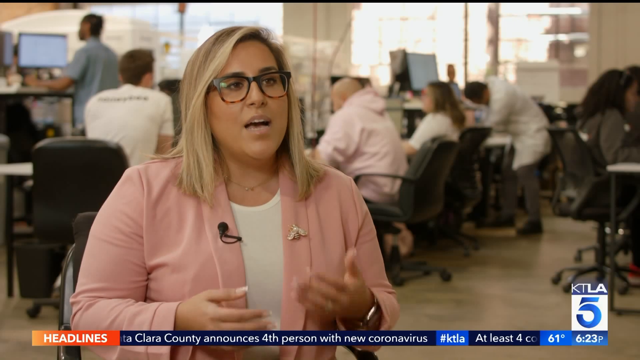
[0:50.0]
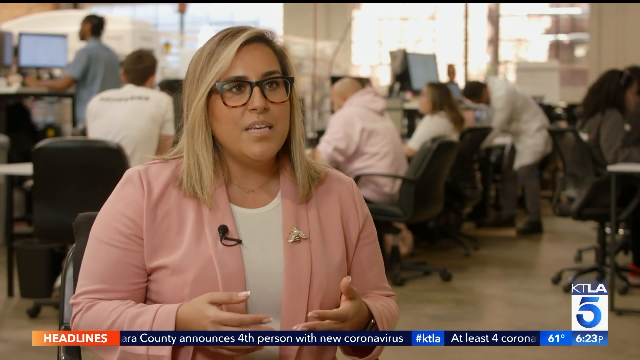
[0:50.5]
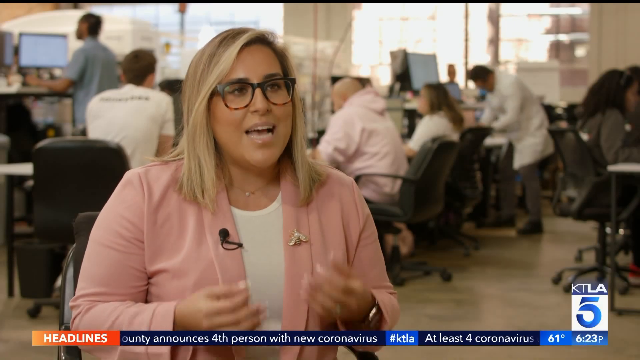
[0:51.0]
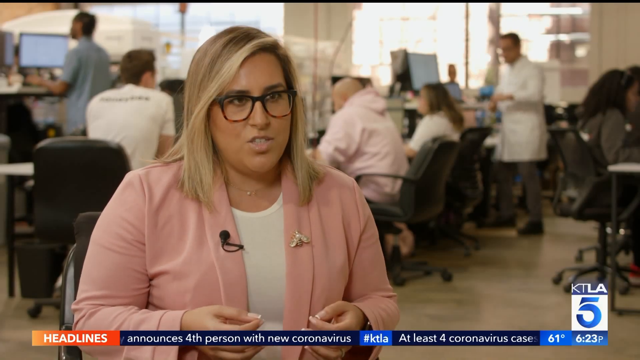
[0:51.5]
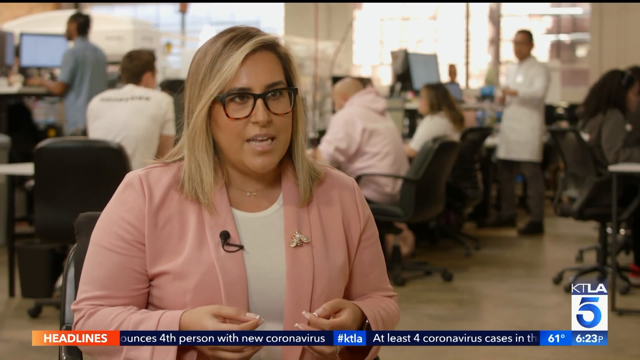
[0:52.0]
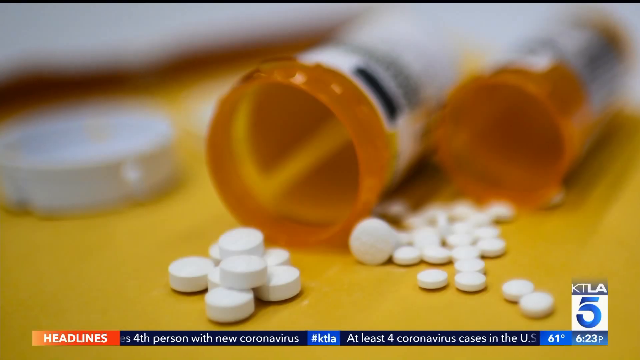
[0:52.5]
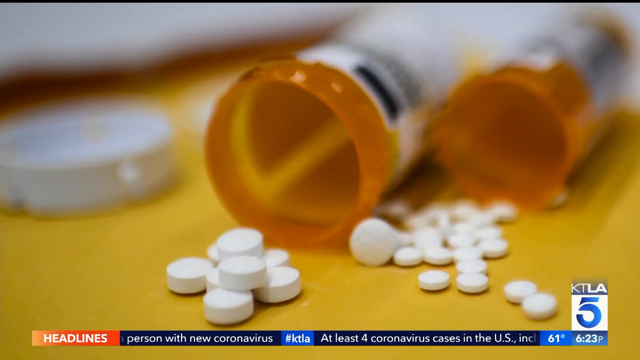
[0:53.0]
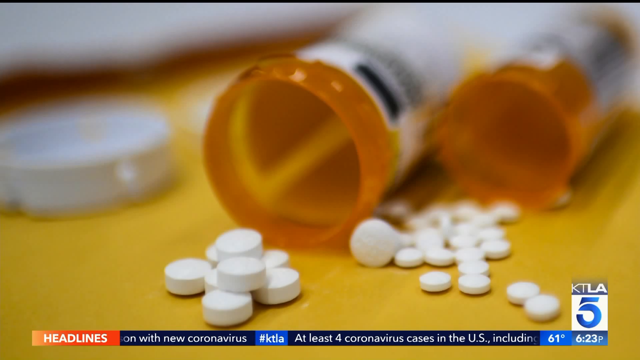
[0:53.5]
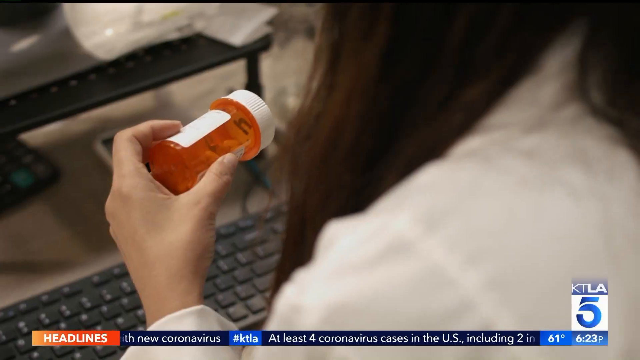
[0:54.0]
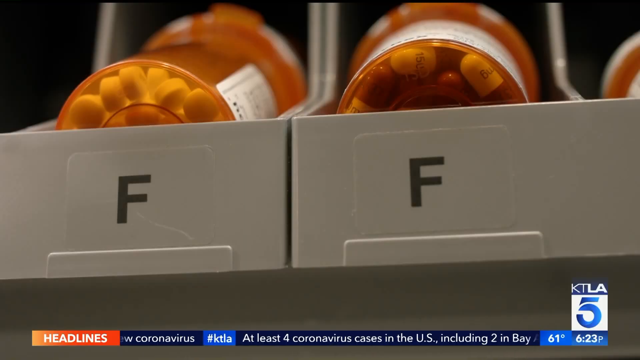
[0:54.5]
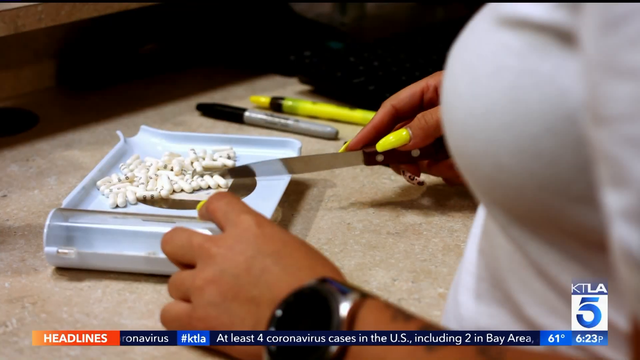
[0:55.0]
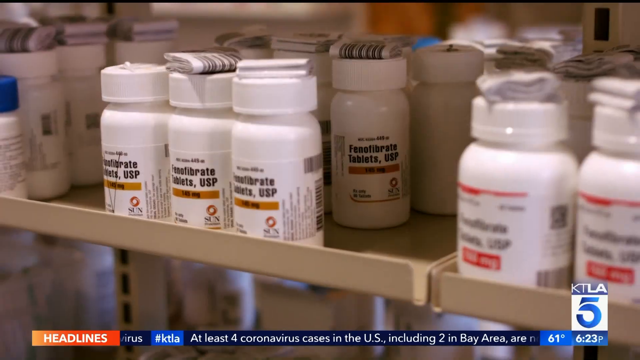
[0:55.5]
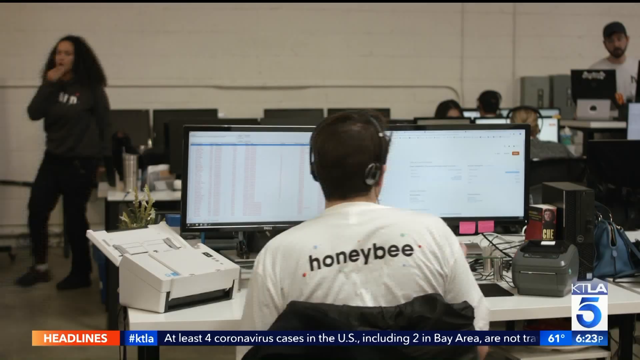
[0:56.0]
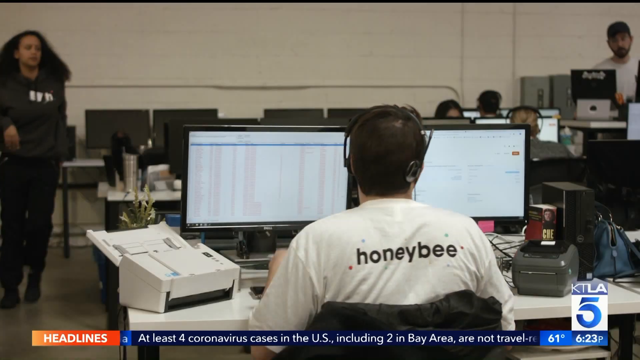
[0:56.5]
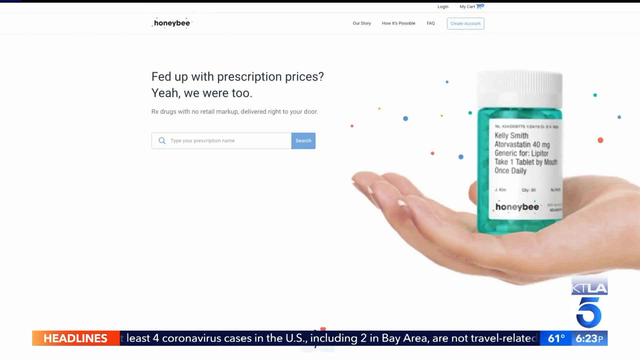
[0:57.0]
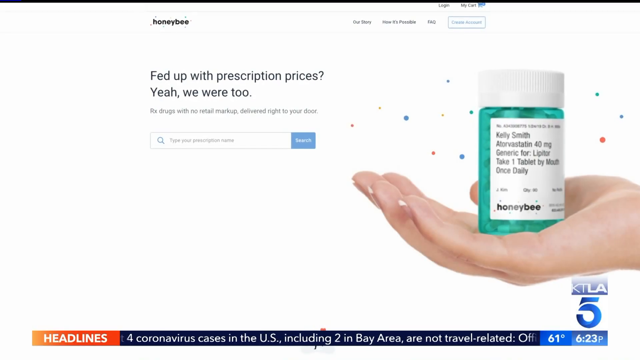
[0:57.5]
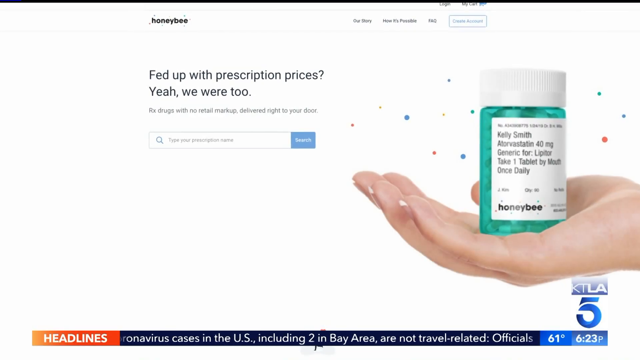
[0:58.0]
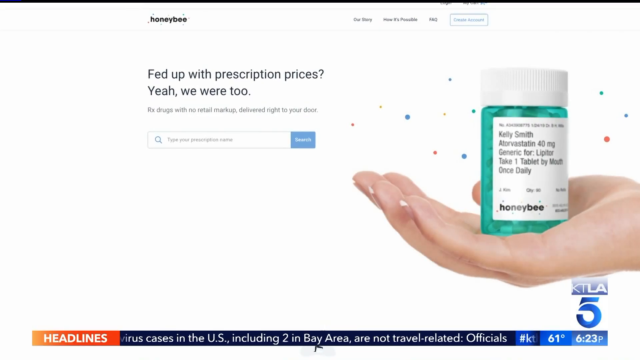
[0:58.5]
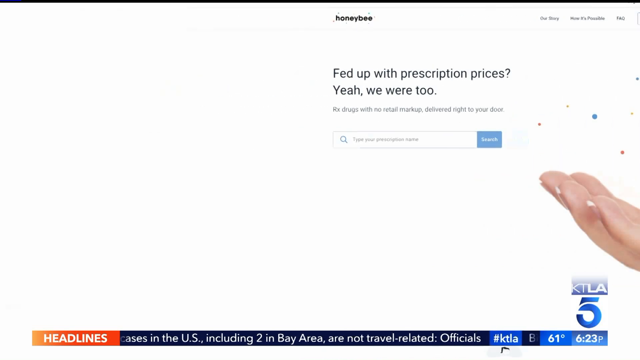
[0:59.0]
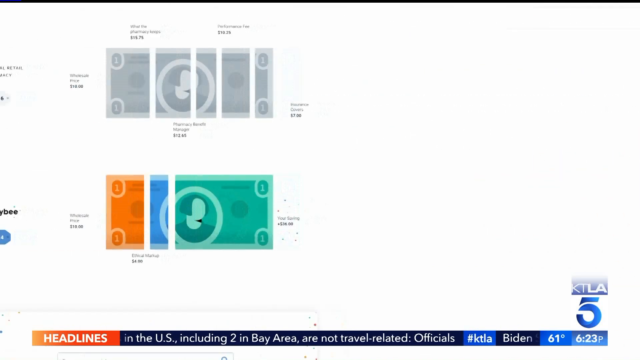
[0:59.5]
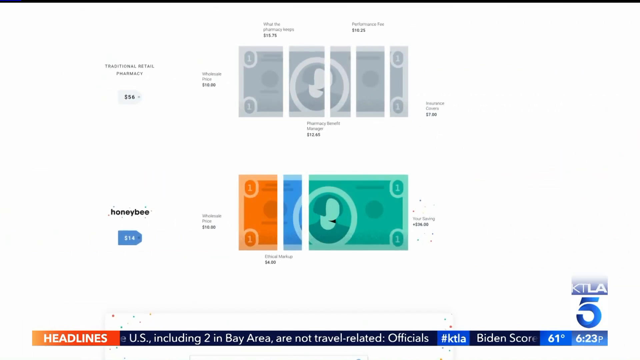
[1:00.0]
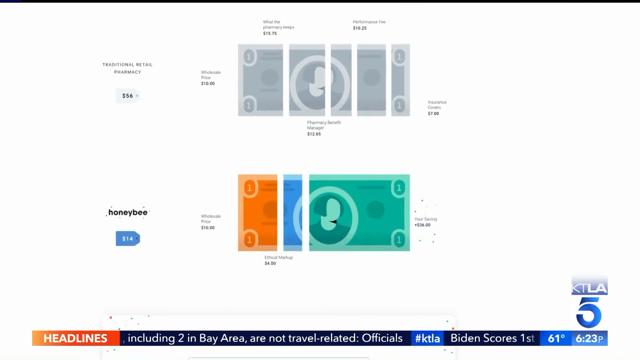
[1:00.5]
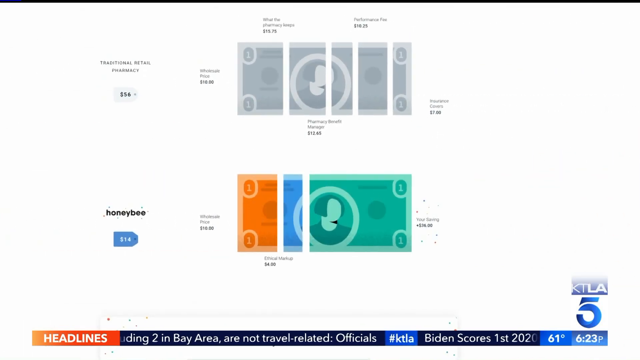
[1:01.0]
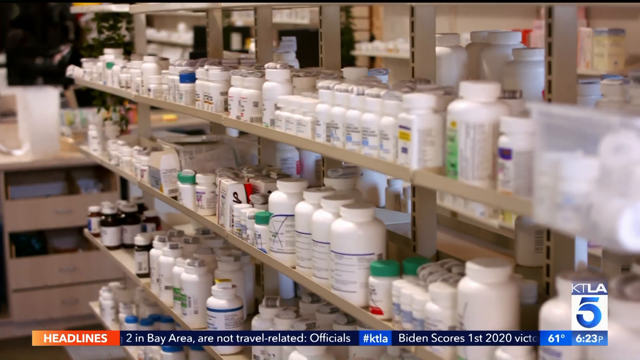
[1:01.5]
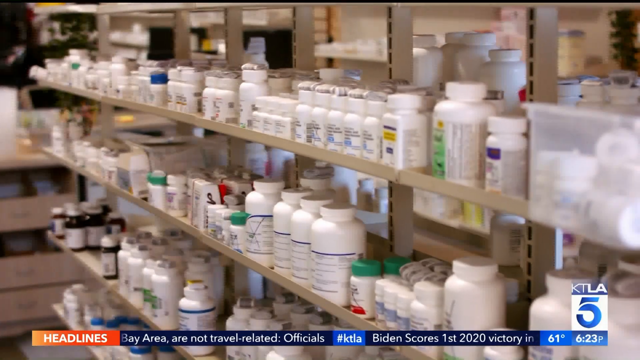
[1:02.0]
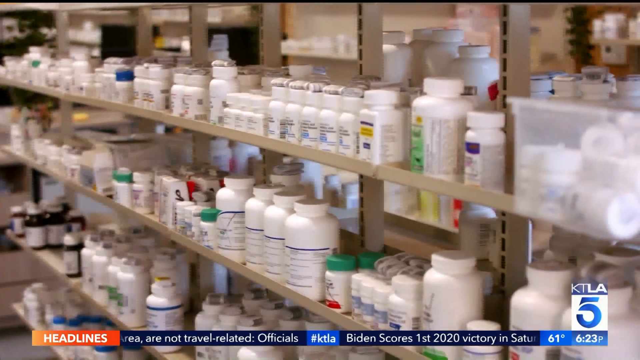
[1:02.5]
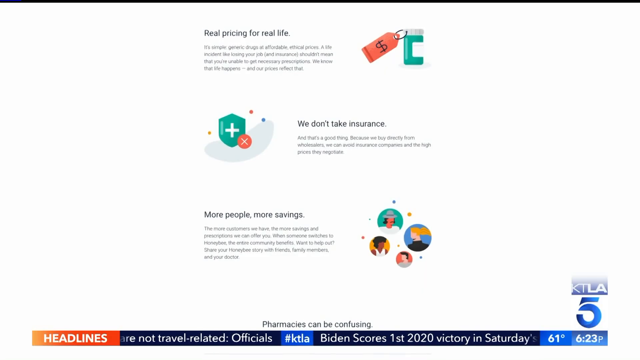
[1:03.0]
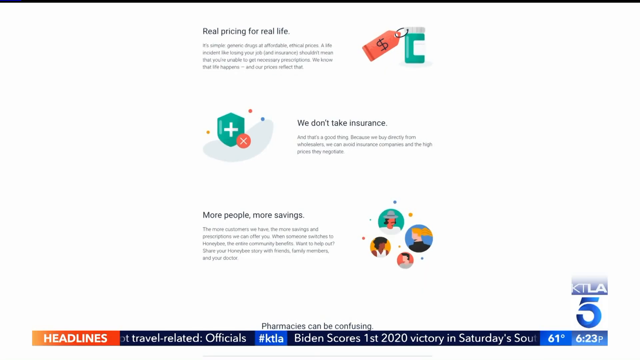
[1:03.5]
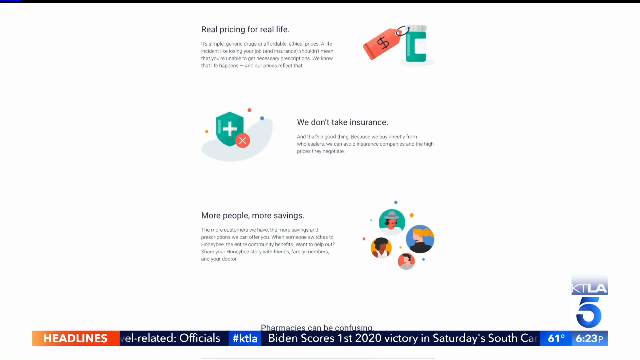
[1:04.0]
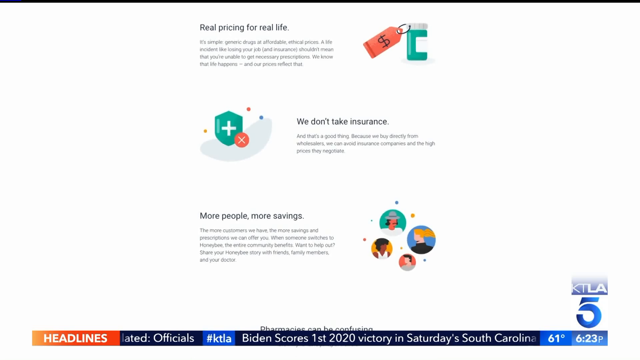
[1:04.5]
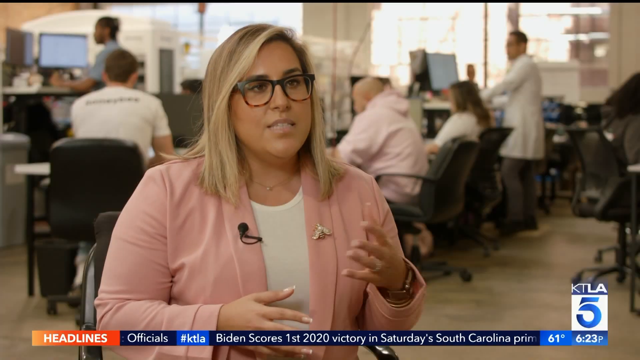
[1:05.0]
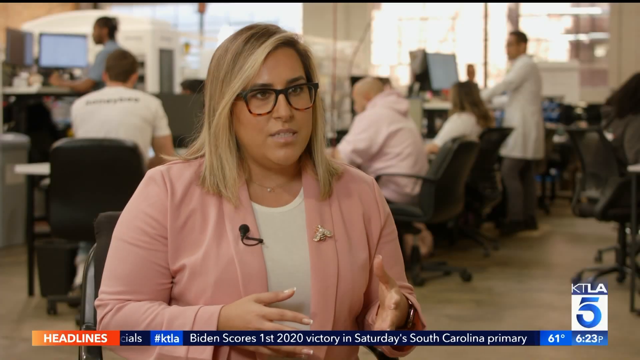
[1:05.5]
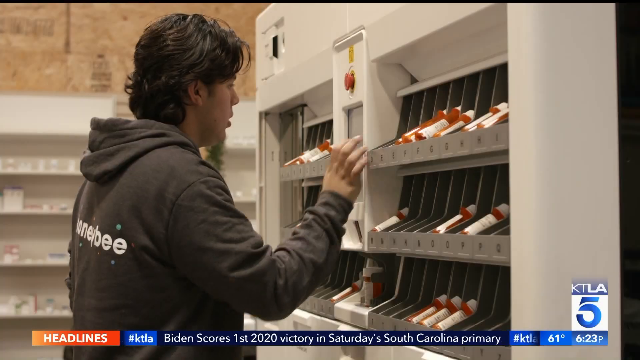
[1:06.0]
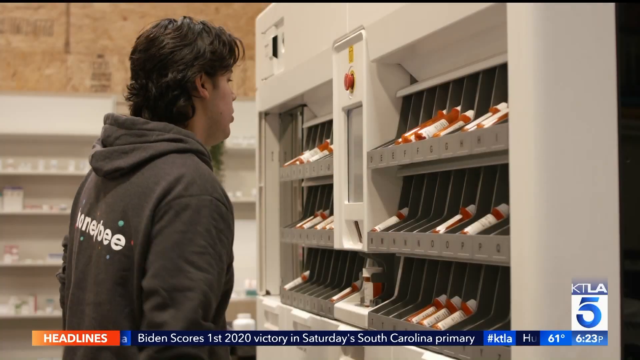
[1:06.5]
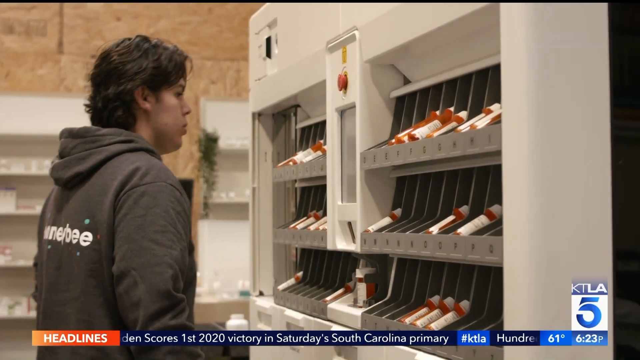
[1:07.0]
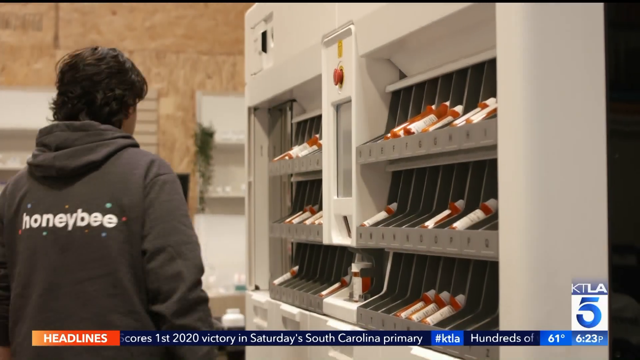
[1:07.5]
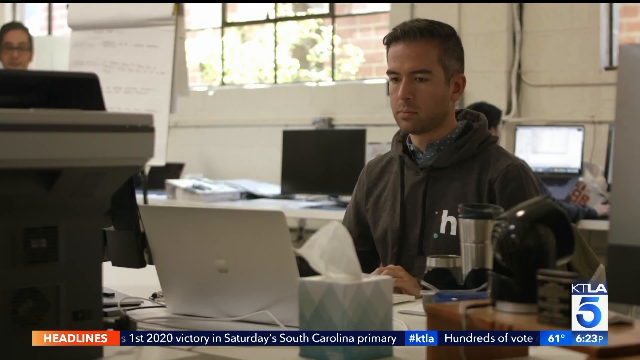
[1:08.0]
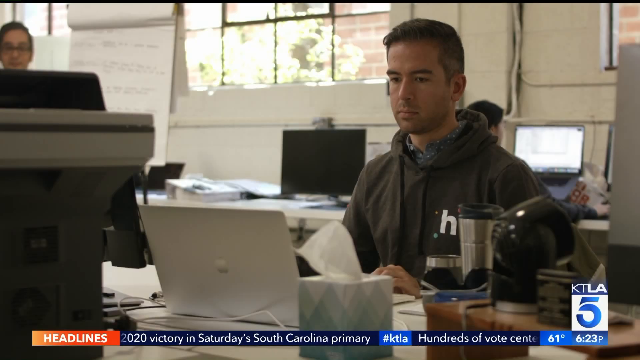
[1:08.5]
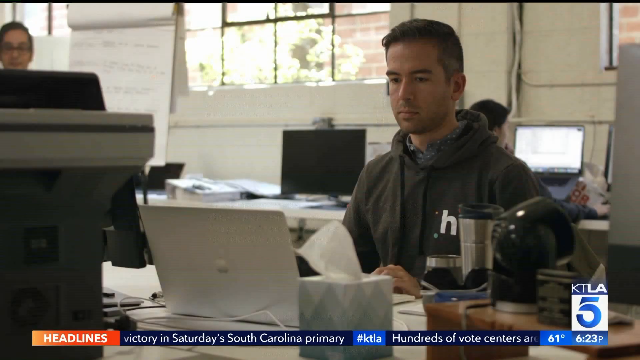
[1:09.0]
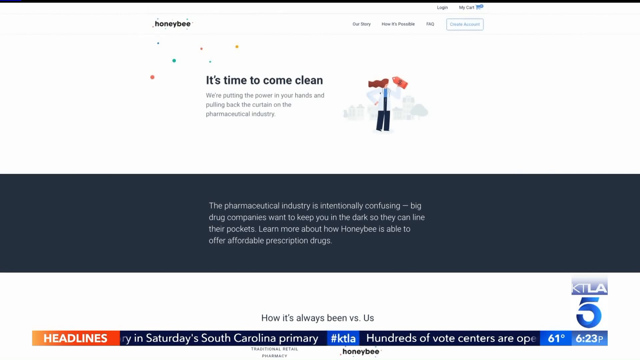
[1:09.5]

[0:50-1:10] The woman in the pink blazer talks with her hands, and the video flips through pharmacy scenes, a website screenshot, more pharmacy scenes, a man in a honeybee sweater, the woman in the call center area, and the honeybee call center or website again. The first image is an amber pill bottle with its white cap removed and pills spilling out. Next, a pharmacist with dark brown hair in a white lab coat holds an amber pill bottle on its side with the lid on; it has a white label whose writing cannot be made out. Then three pill bottles lie on their sides in a pharmacy setting, followed by a line of pill bottles. In the call center, a man in a white long-sleeve shirt with the word honeybee on the back looks at two computer screens, with a fax machine on the left side of his desk. Beyond him are many more computer screens and about half a dozen people. A Honeybee website then appears, reading "fed up with prescription prices. Yeah, we were too." with a field to search for a prescription.